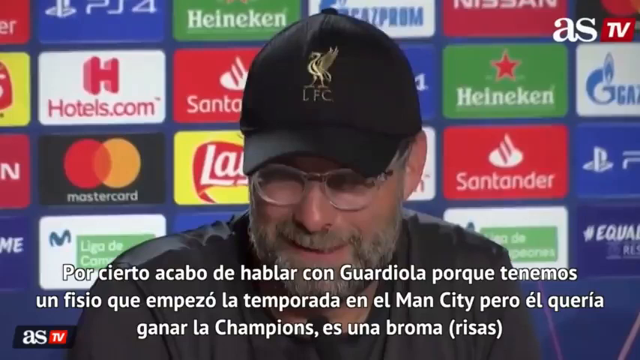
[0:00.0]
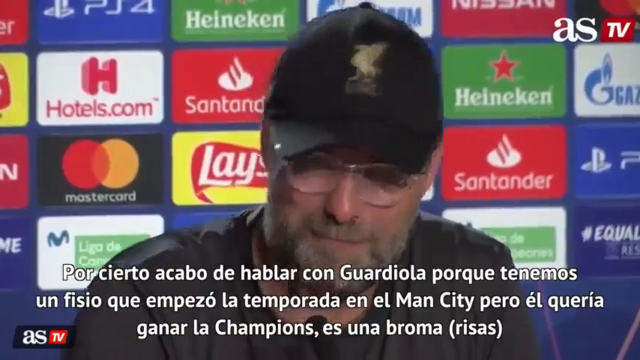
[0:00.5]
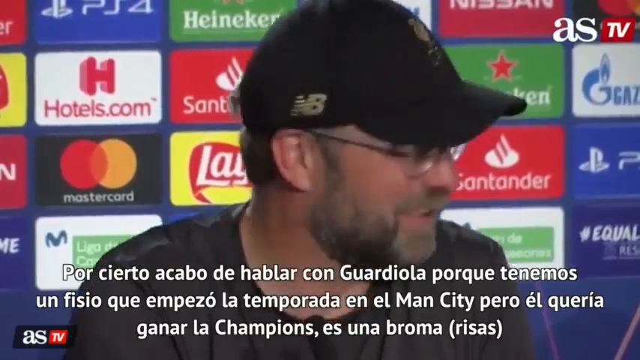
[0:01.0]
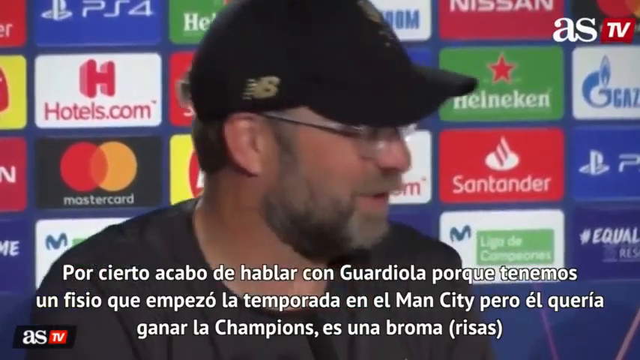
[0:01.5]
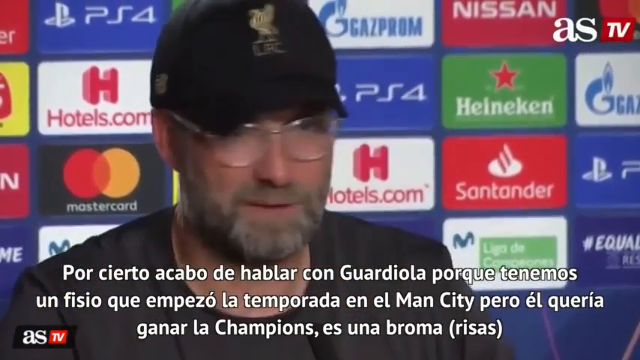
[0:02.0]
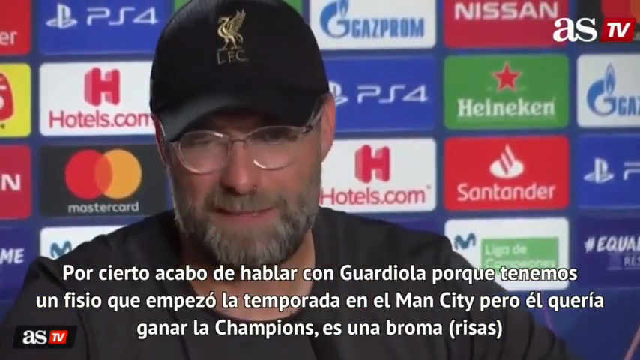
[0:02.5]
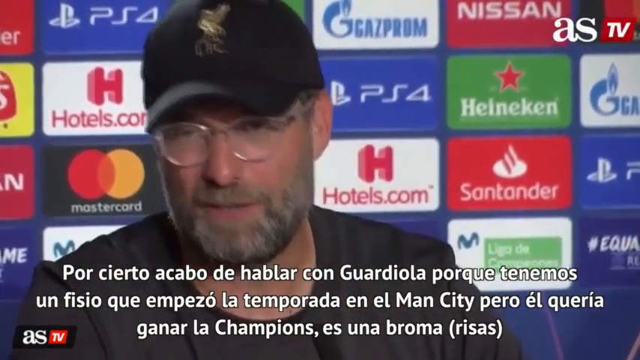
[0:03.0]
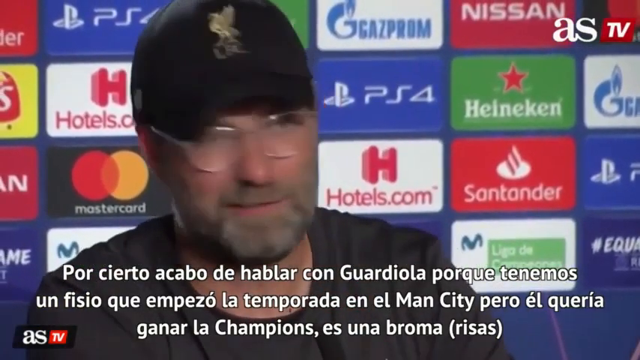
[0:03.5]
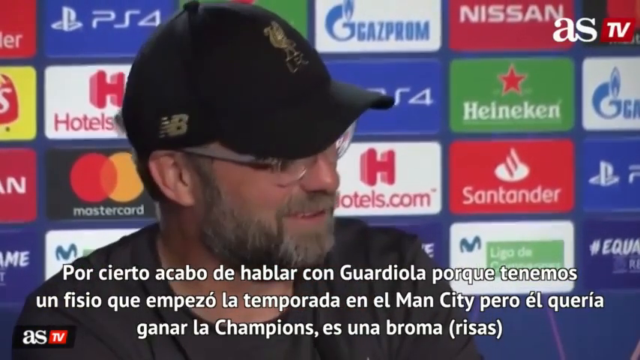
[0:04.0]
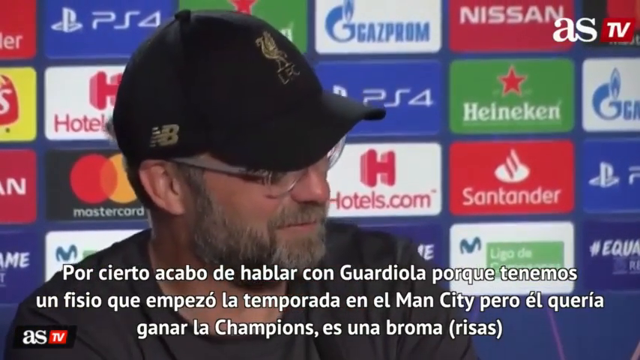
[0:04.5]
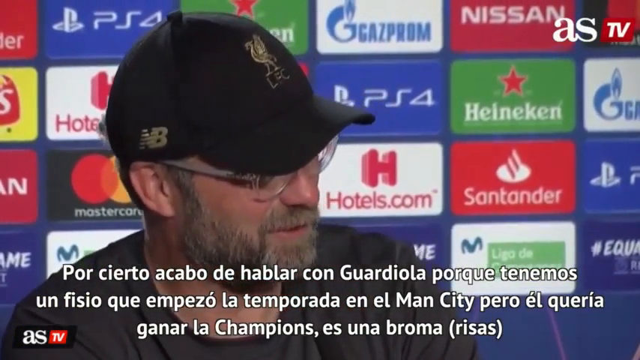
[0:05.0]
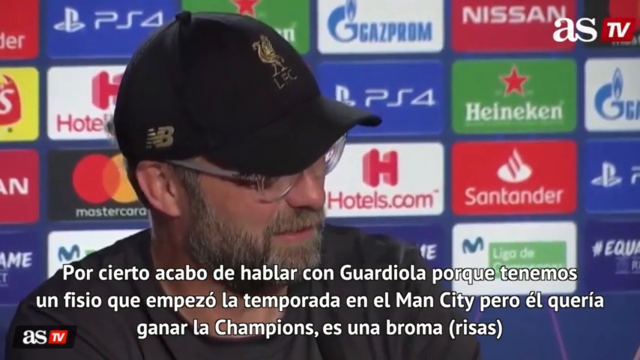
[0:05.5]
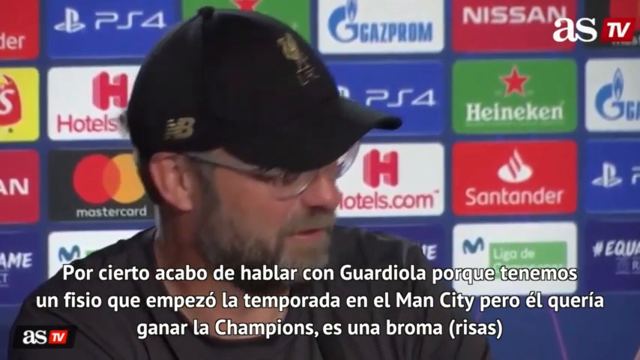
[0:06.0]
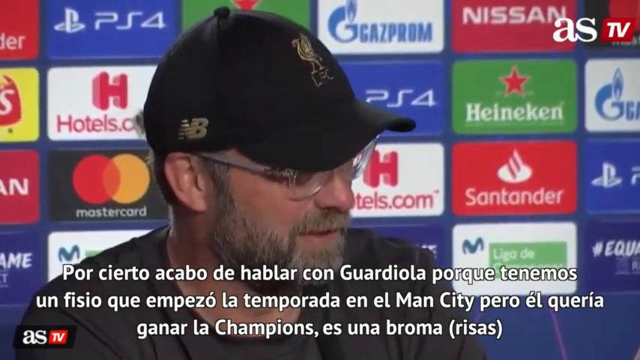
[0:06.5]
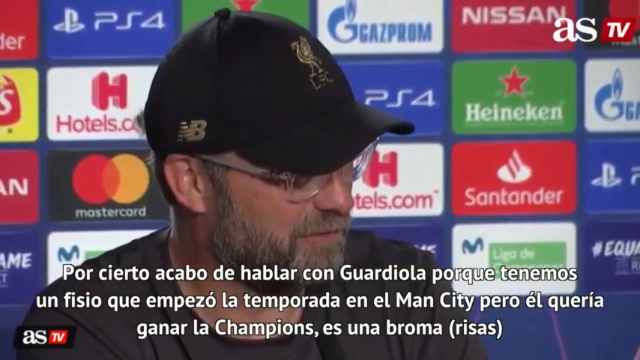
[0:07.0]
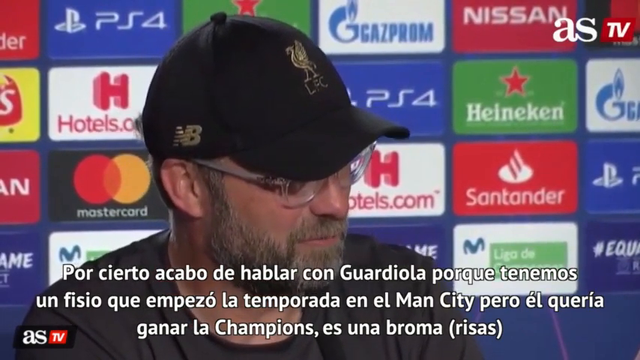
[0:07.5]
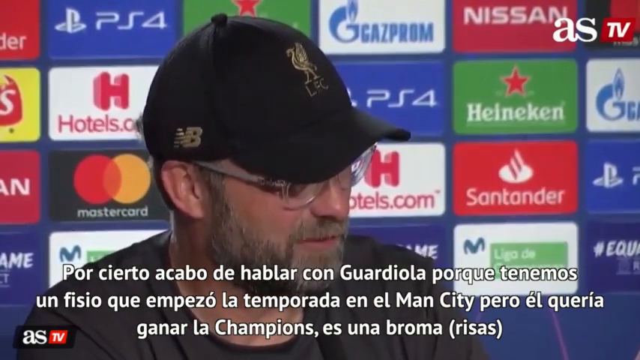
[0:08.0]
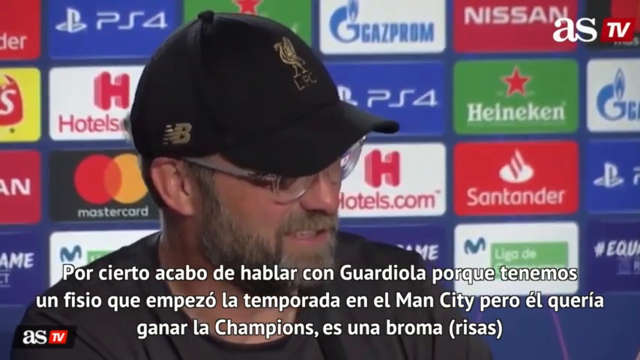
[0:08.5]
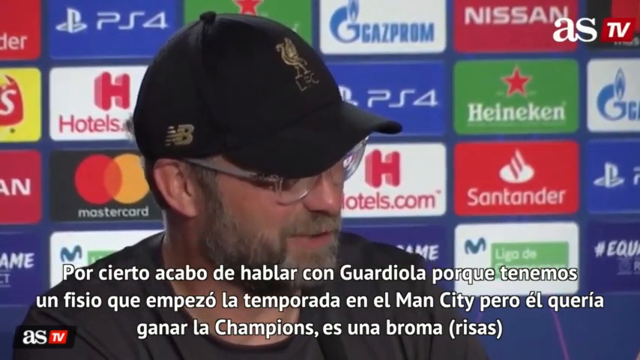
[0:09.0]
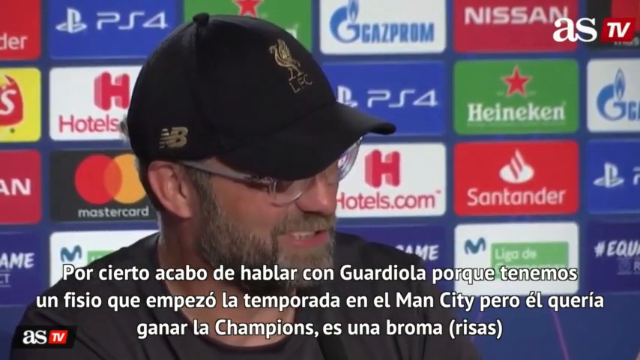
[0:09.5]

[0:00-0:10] What looks like an after-game broadcast shows a coach sharing his views of the game. He wears a black baseball hat with a gold logo on the front, glasses, and a black shirt, and has a salt-and-pepper mustache and a full salt-and-pepper beard. Behind him, the background shows the logos of the many companies sponsoring the sport, including PS4, Hotels.com, MasterCard, Heineken, Blaze and Nissan. As he speaks he smiles and looks down in front of him, as if he may be looking at notes on a desk, though no desk is visible. He also looks over at someone who is most likely interviewing him, though that person is not shown. Words in an unidentified language appear toward the bottom of the screen. In the upper right corner are the words "AS" and "TV": "AS" is written in white, and "TV" is written in white on a red square.